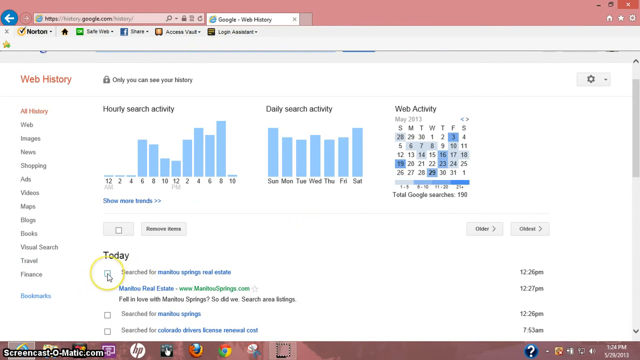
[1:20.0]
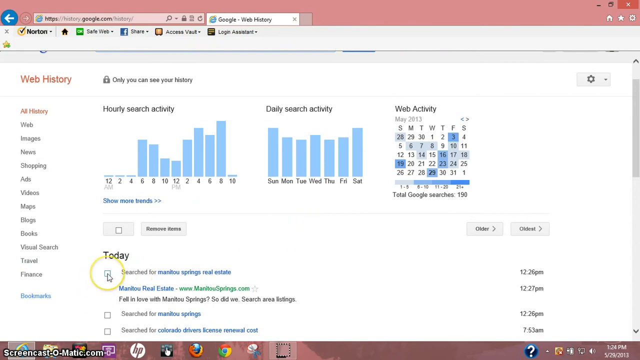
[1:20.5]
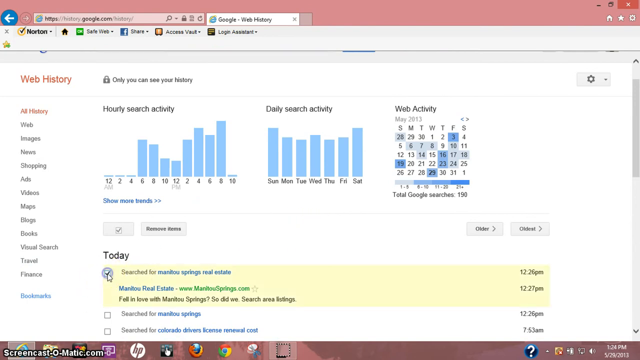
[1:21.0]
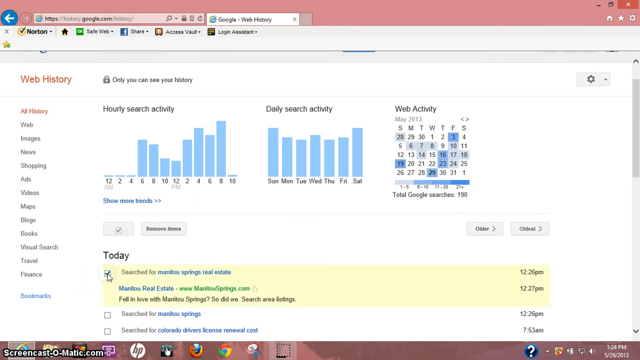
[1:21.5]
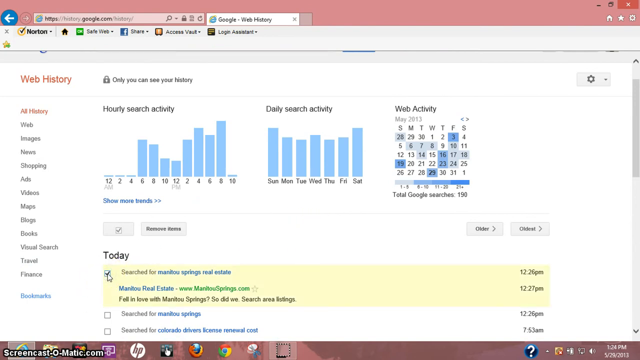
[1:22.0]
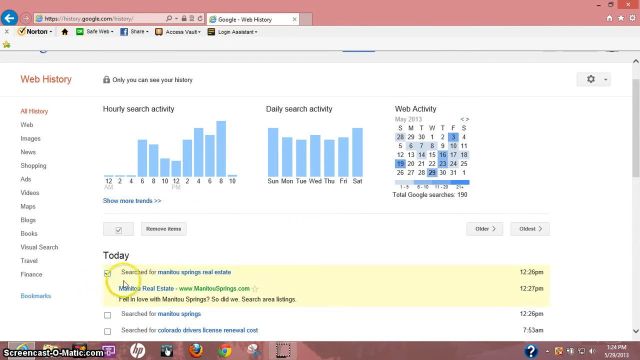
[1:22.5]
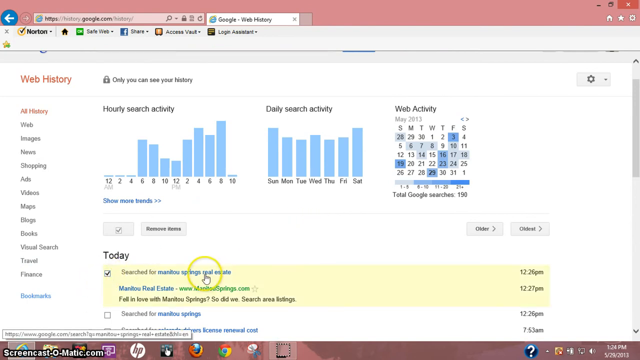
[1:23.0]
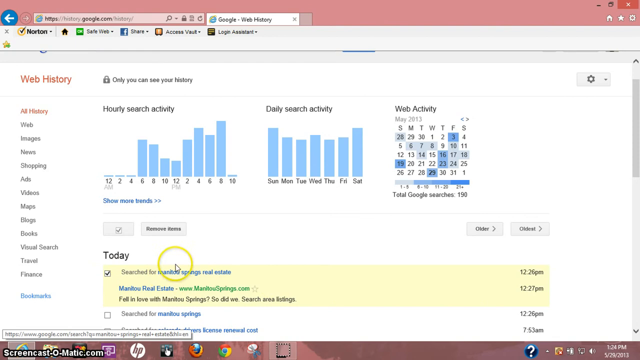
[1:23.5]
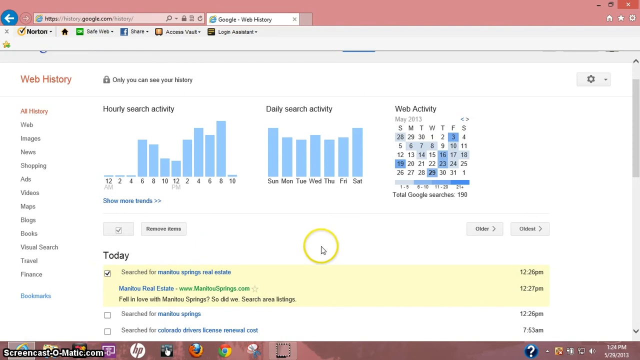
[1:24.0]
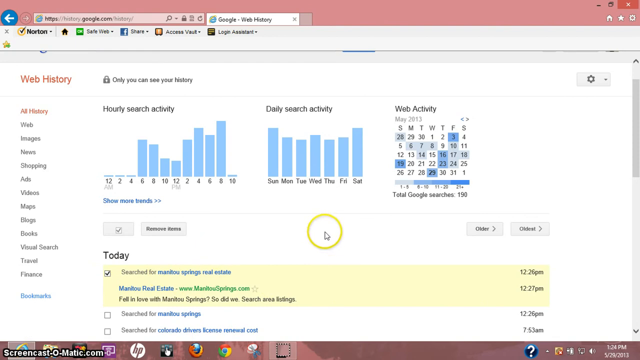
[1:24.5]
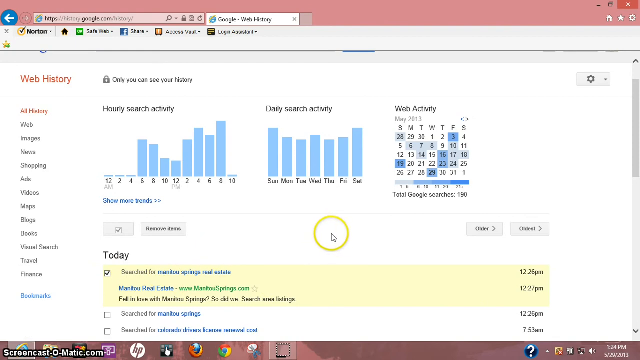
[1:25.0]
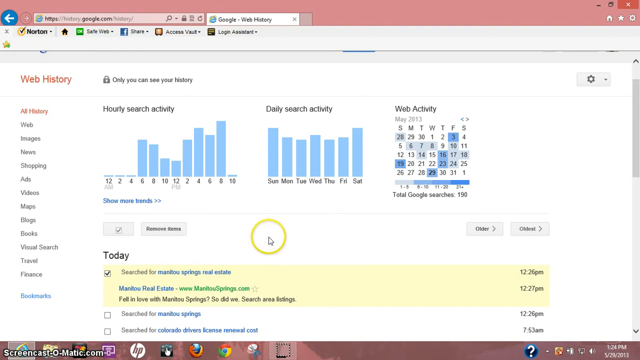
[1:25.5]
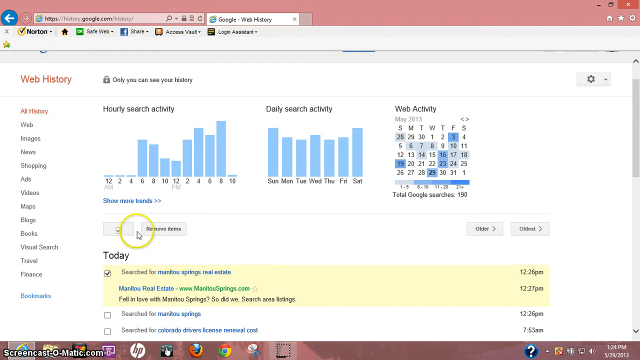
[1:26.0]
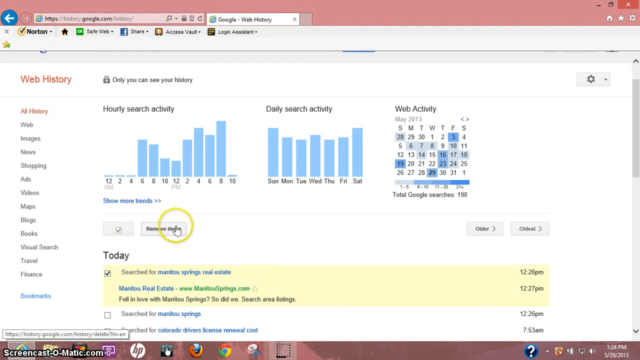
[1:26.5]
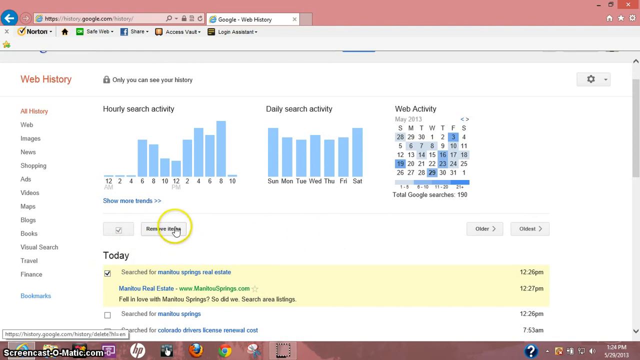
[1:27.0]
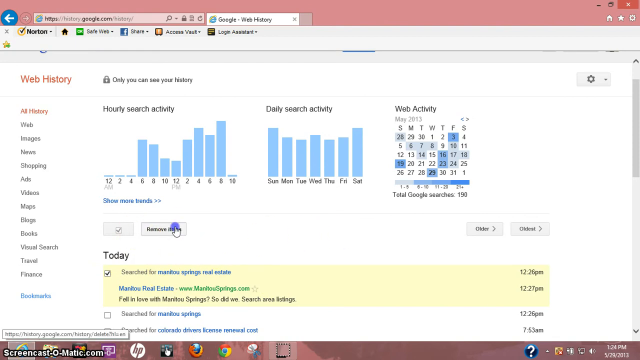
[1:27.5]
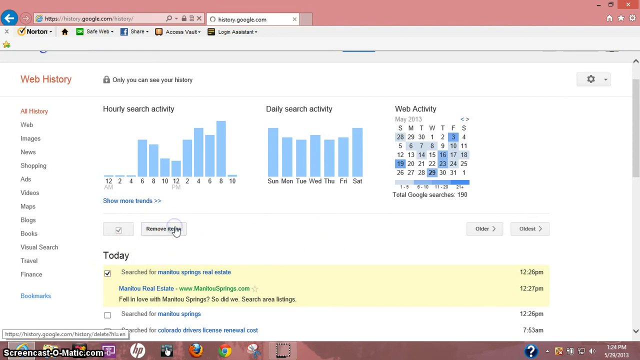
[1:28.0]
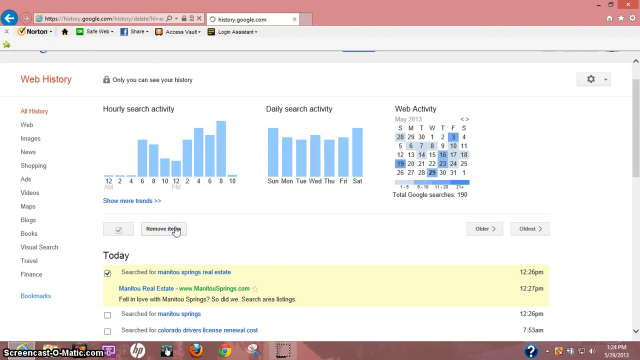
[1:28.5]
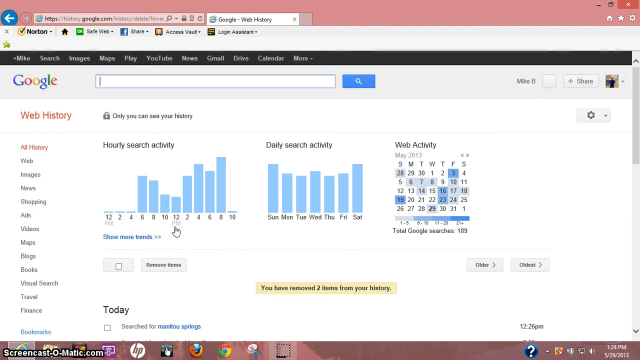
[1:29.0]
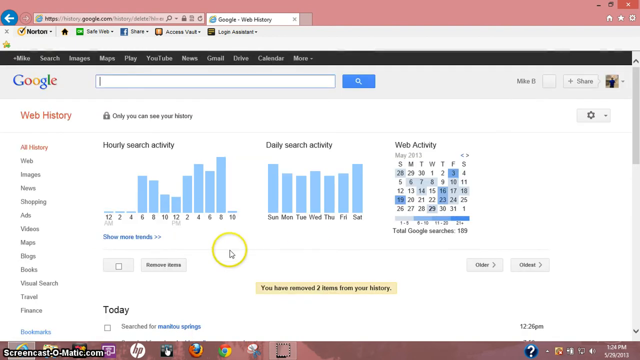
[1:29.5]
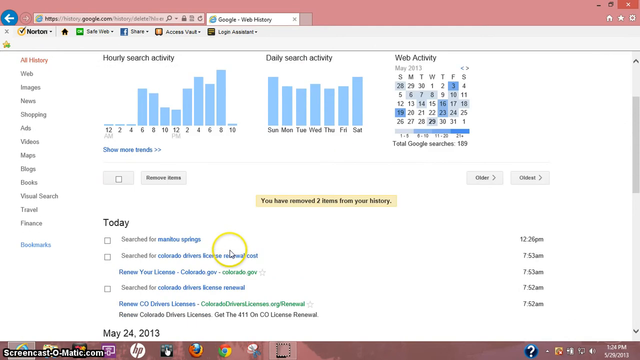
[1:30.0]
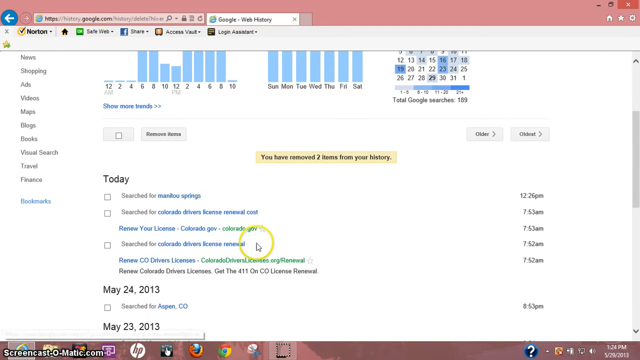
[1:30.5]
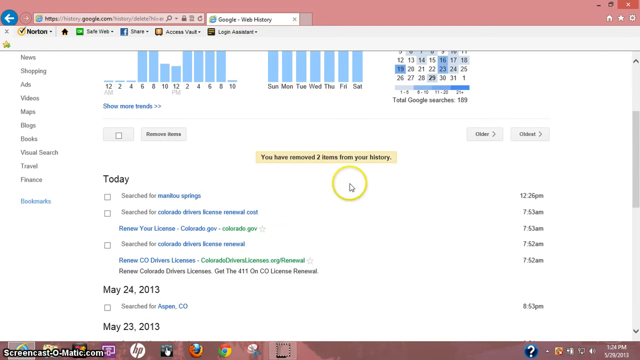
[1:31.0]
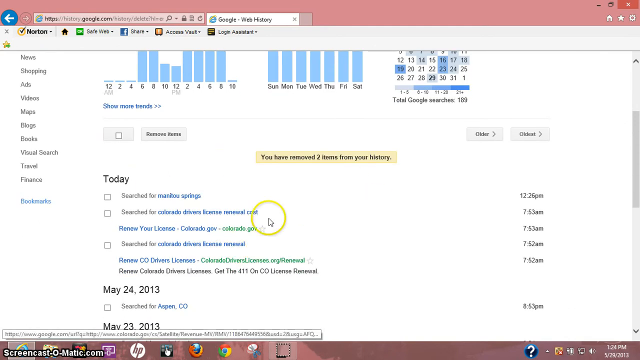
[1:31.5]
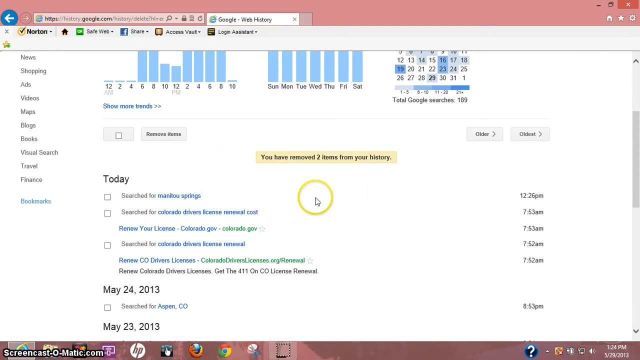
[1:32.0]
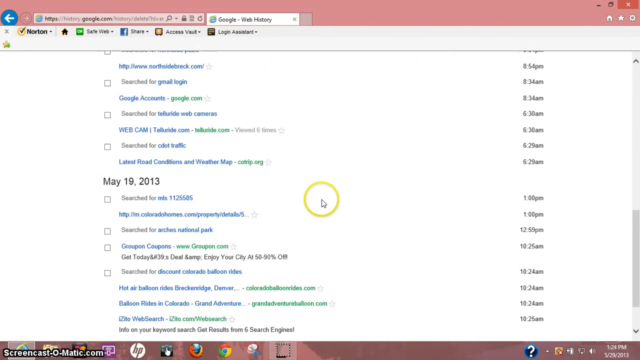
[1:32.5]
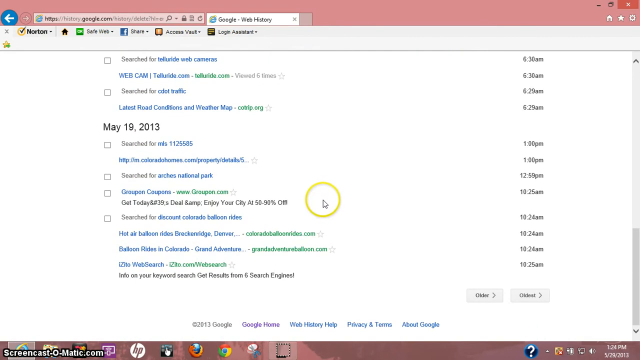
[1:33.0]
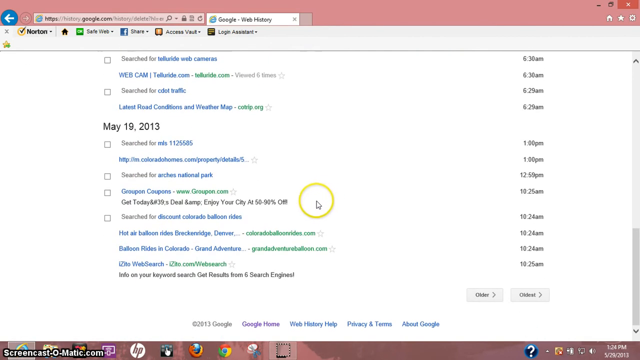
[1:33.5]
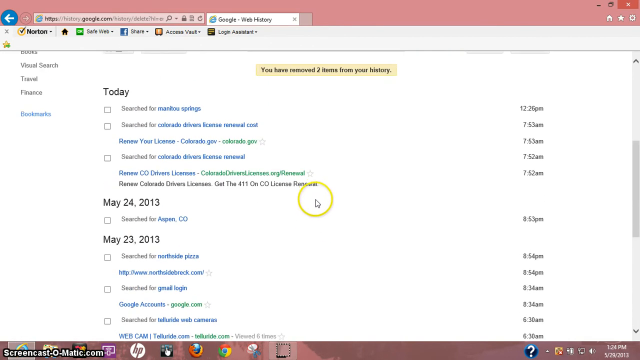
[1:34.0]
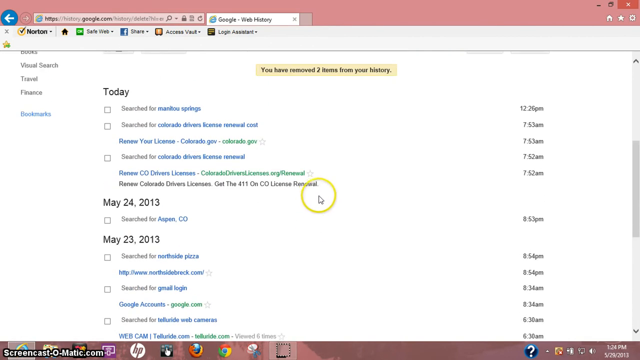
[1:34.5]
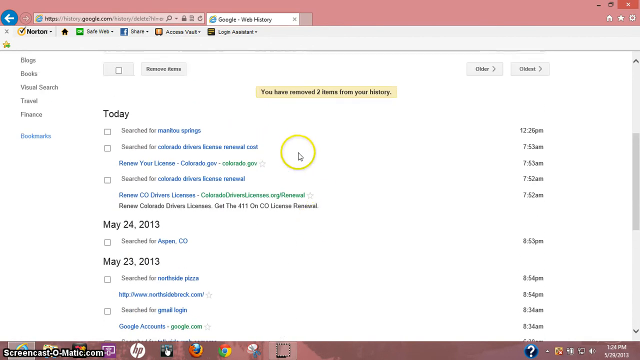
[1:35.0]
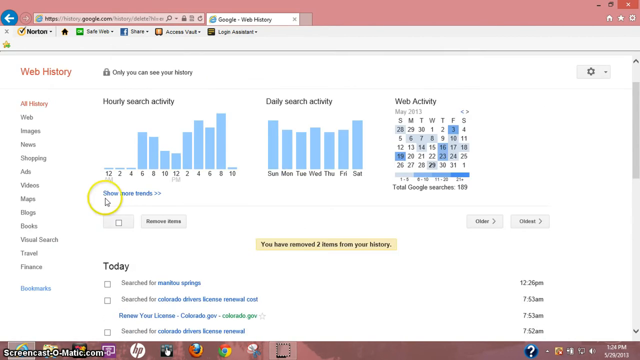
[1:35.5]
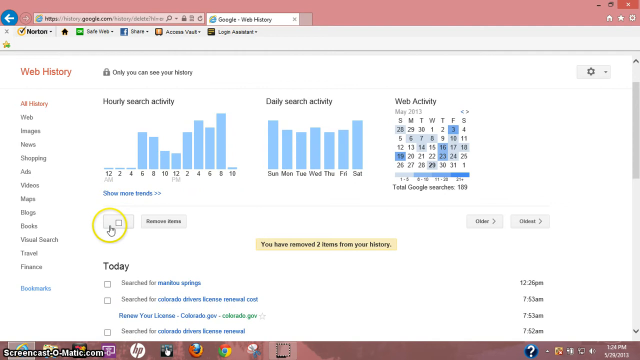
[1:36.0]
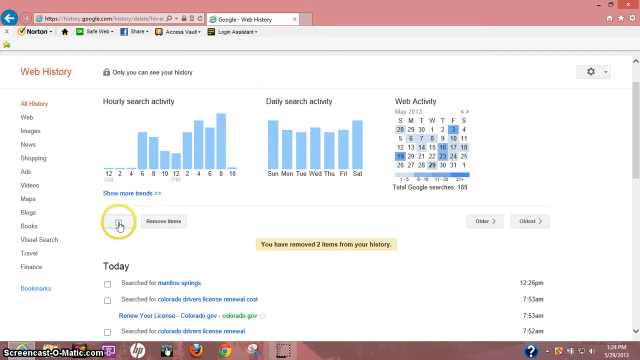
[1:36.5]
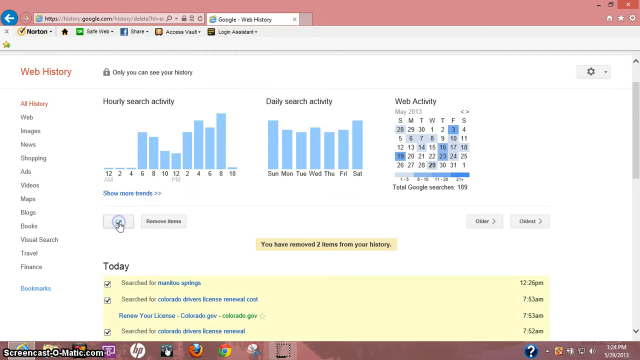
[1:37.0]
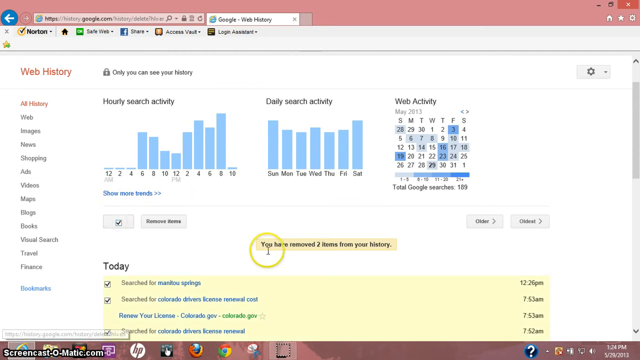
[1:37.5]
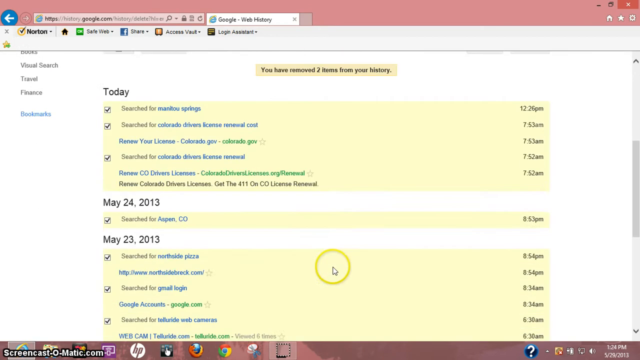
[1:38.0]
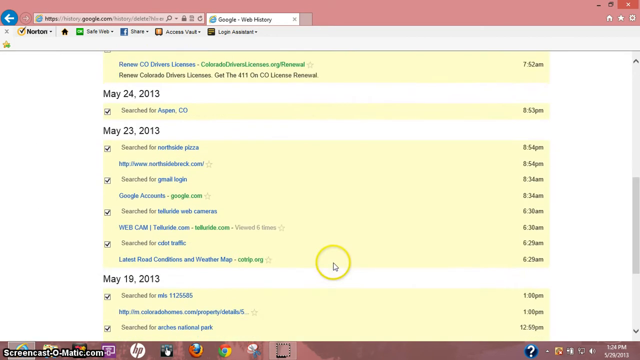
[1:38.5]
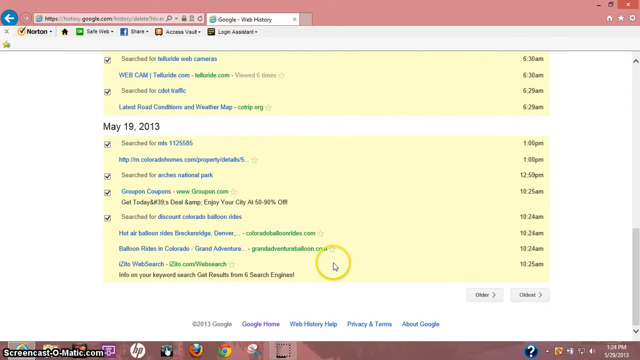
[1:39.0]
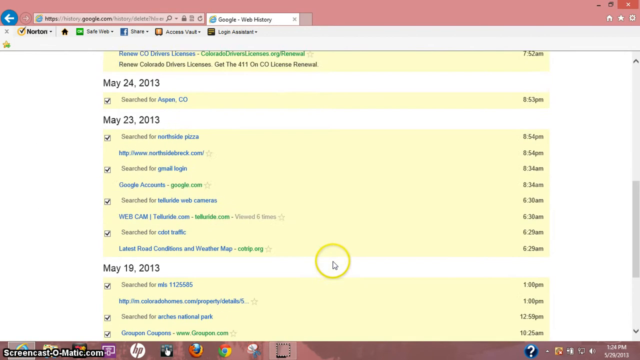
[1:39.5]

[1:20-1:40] A Google web history page shows web history, image history and many other kinds of history for the person using the site. Graphs at the top are labeled "hourly search activity" and "daily search activity", followed by a web activity calendar. A mouse cursor circled in yellow hovers over a box underneath the word "today" and clicks it, and a blue checkmark appears inside the box, with a section highlighted in yellow. The cursor changes to a pointing finger and hovers over some of the text, then moves up and clicks a remove button. The pointer scrolls down the page and back up, then clicks a tick box next to a box that says "remove items". The page changes and many boxes become ticked. The cursor moves around some more, clicks "remove items", and the page shows that some items were removed from the history.